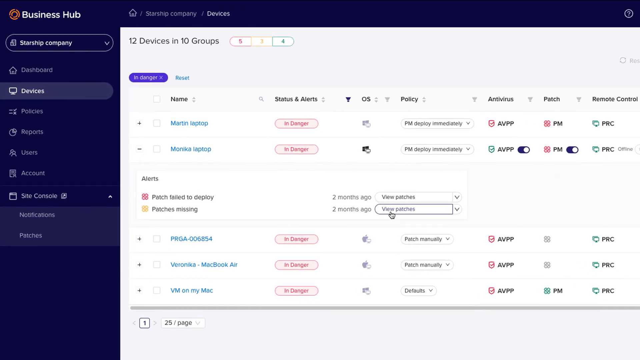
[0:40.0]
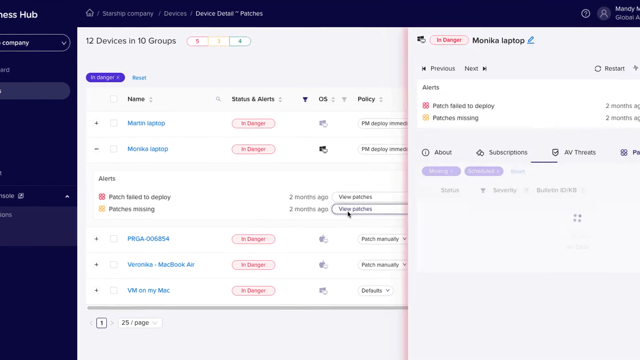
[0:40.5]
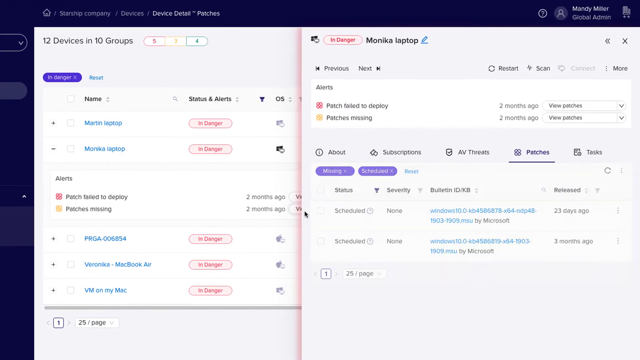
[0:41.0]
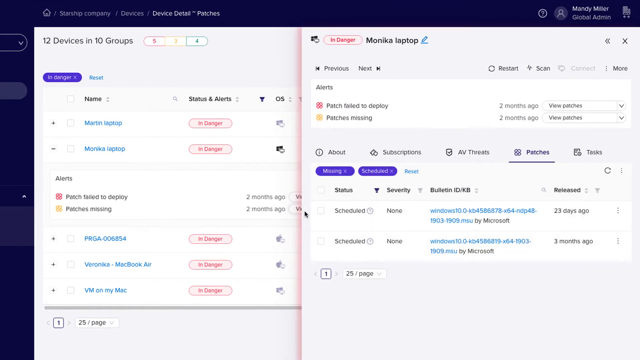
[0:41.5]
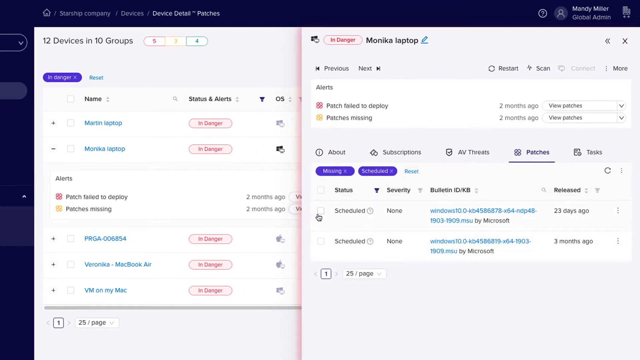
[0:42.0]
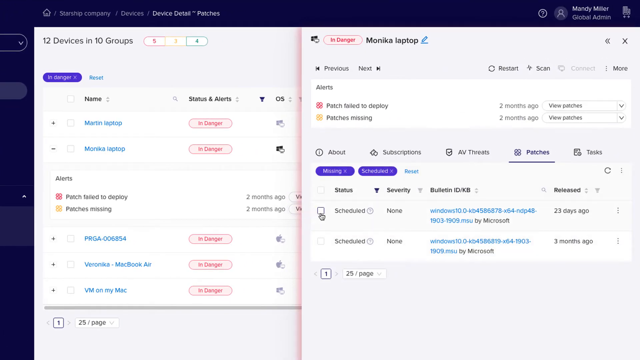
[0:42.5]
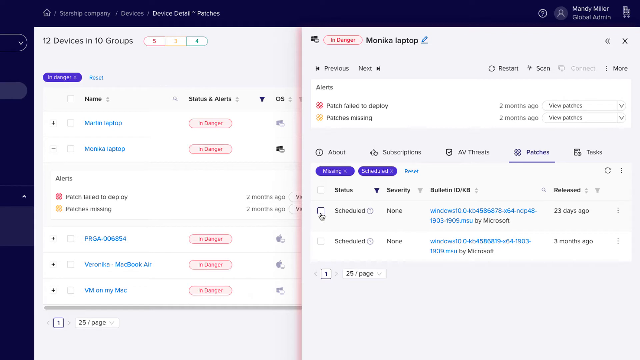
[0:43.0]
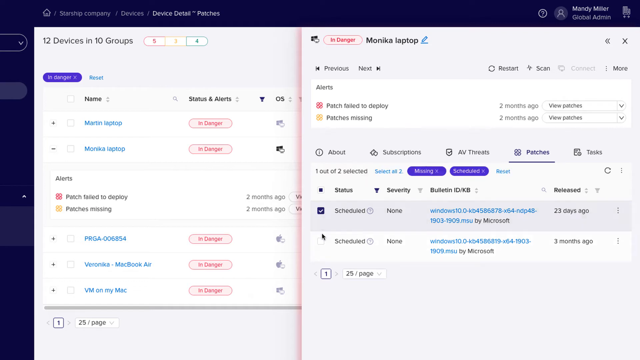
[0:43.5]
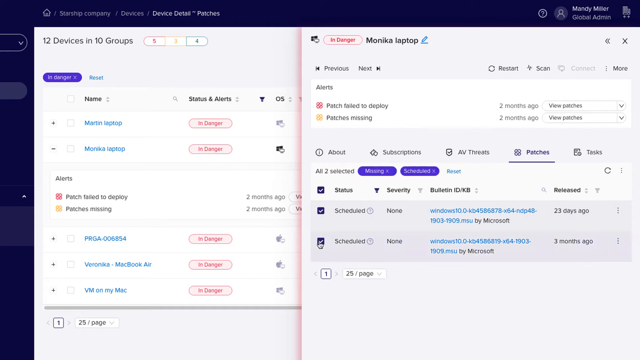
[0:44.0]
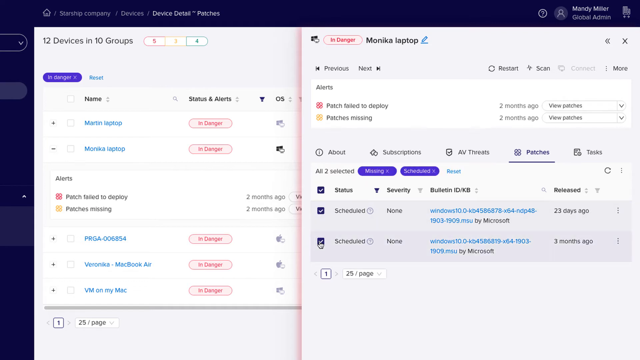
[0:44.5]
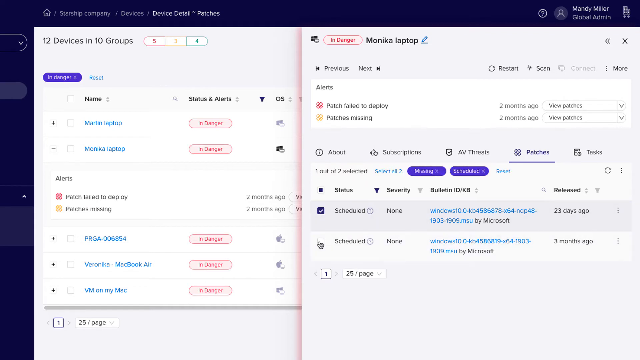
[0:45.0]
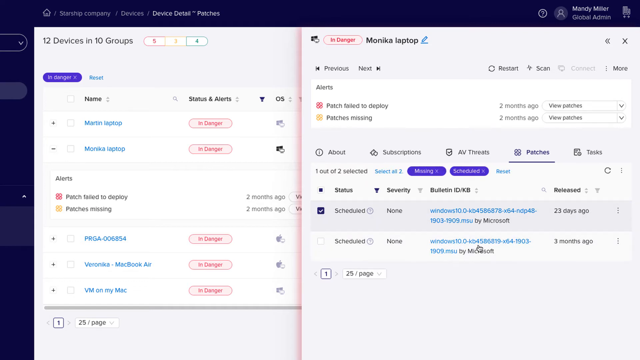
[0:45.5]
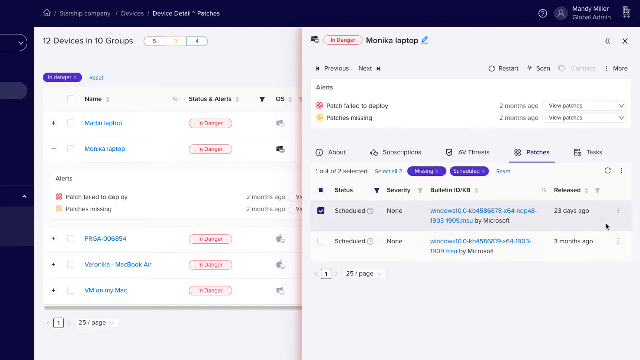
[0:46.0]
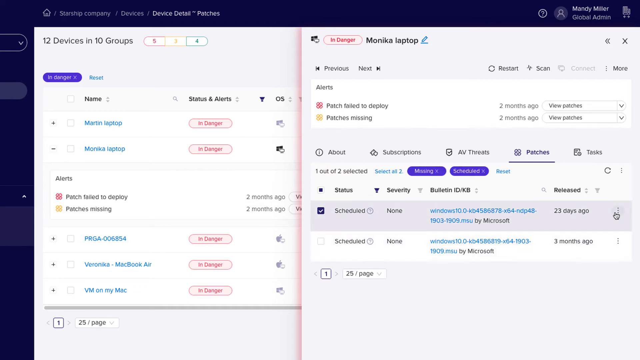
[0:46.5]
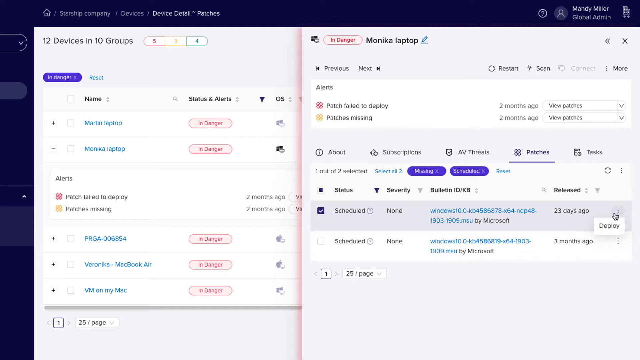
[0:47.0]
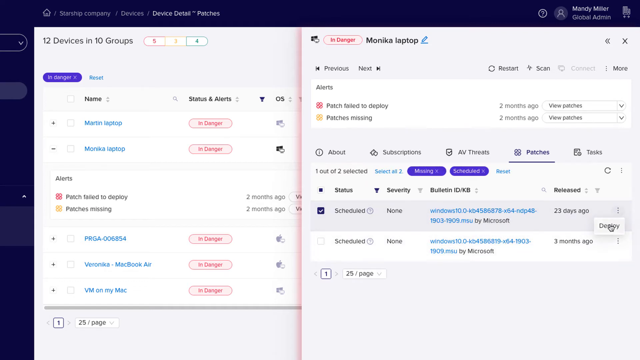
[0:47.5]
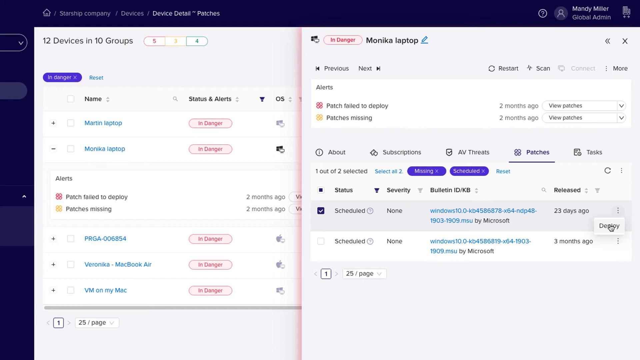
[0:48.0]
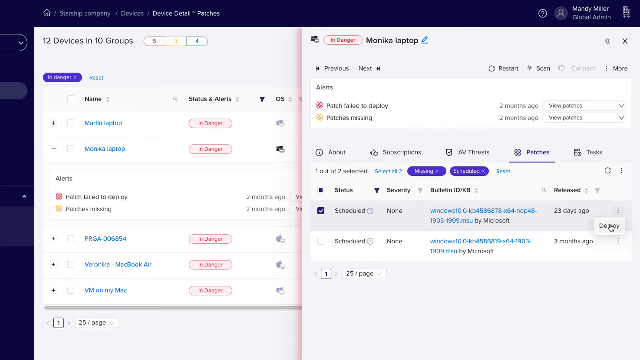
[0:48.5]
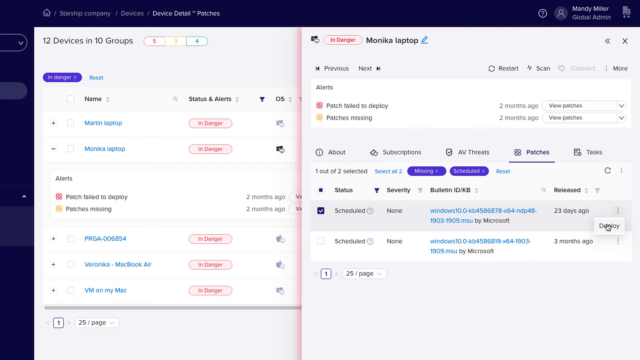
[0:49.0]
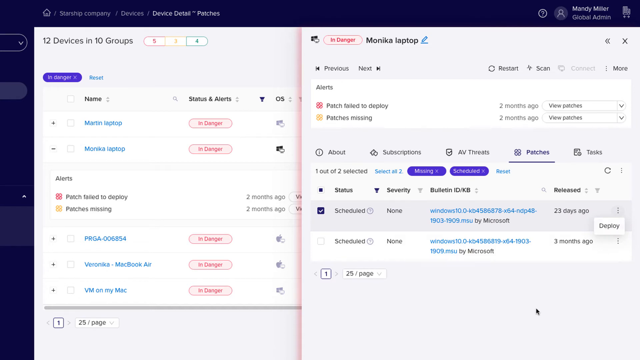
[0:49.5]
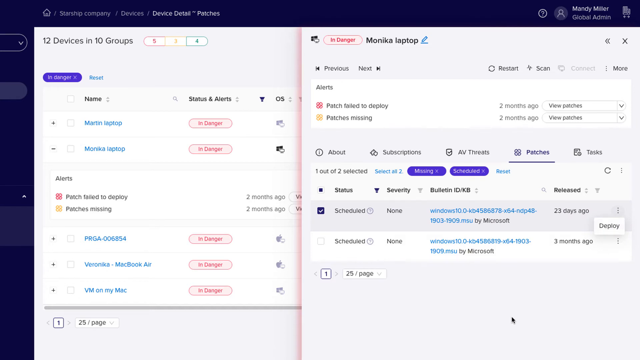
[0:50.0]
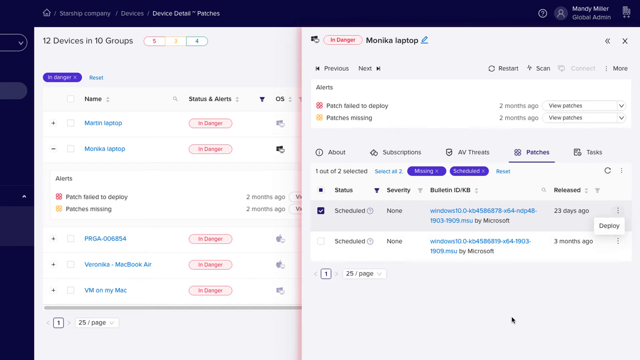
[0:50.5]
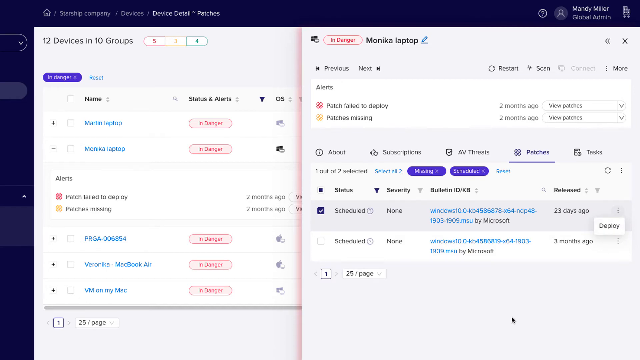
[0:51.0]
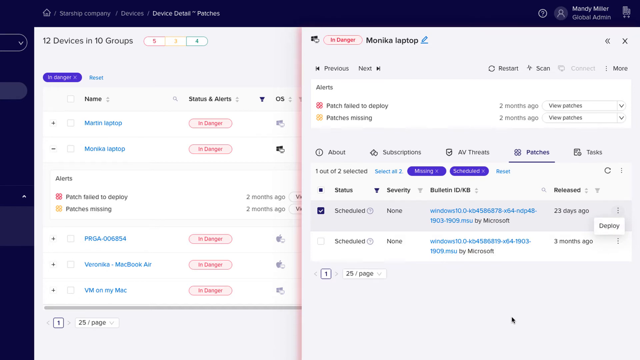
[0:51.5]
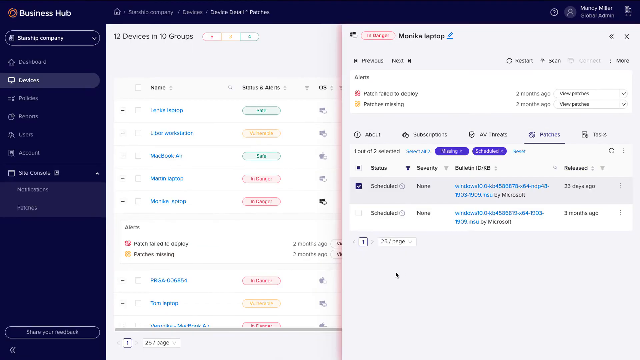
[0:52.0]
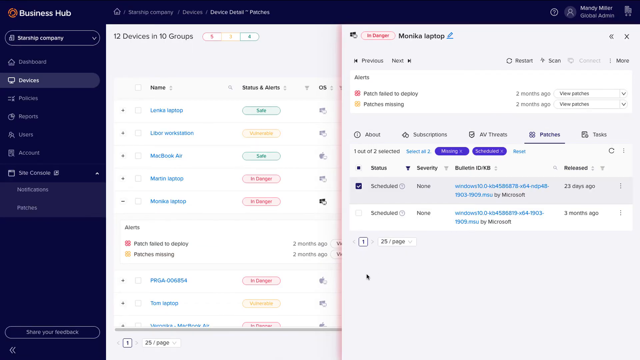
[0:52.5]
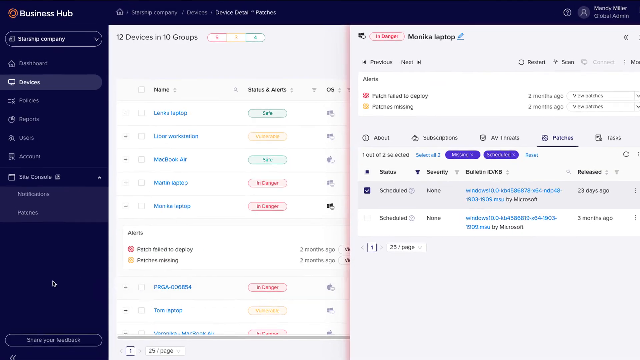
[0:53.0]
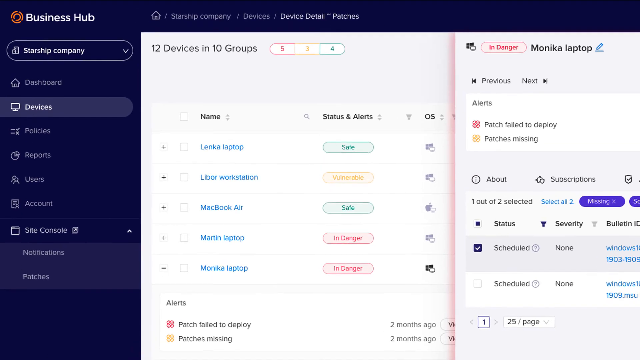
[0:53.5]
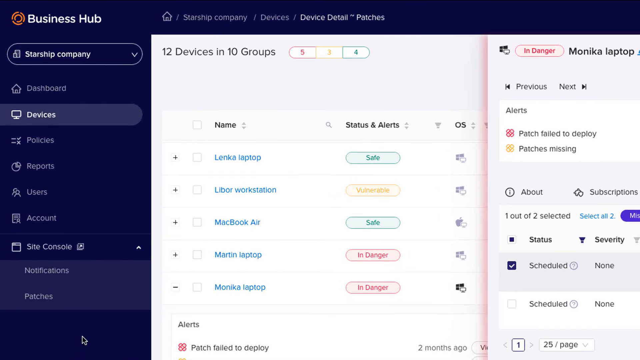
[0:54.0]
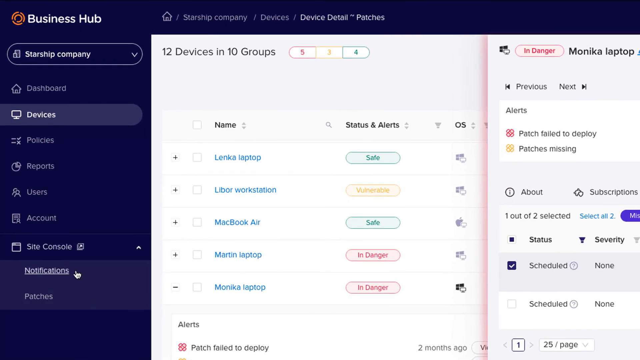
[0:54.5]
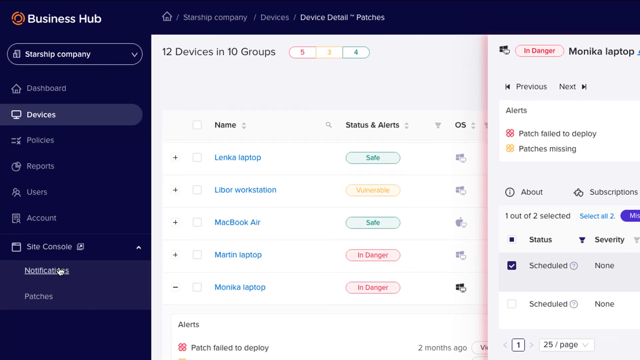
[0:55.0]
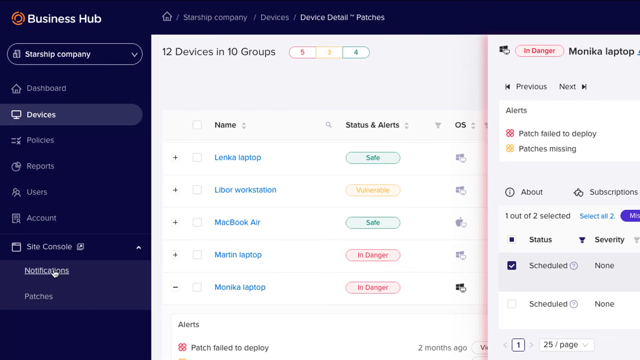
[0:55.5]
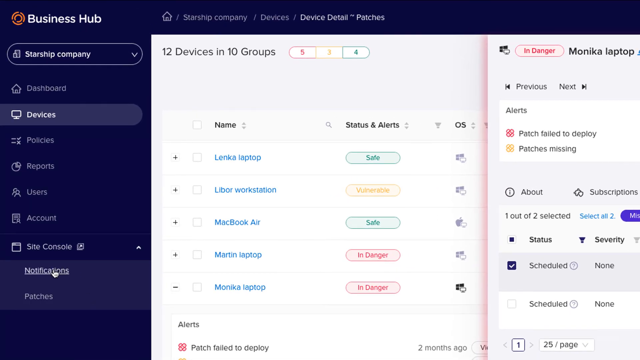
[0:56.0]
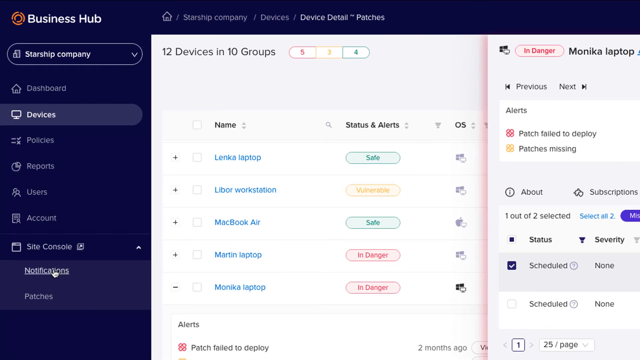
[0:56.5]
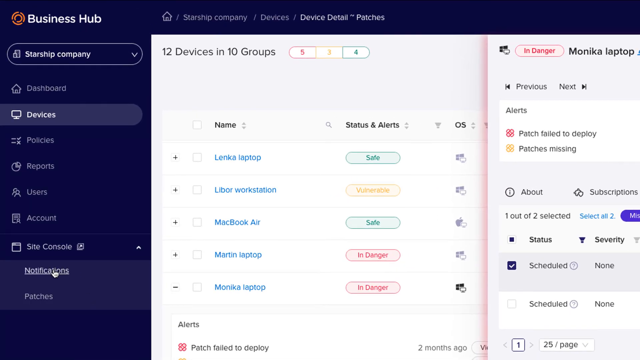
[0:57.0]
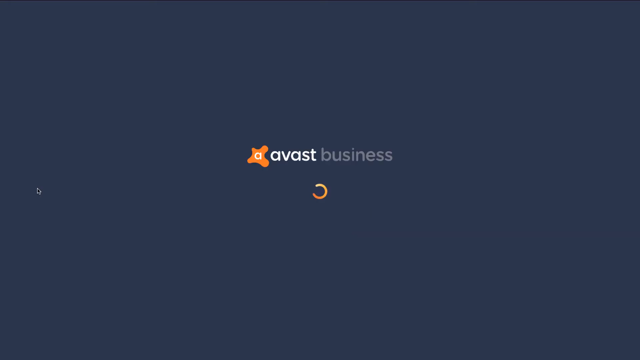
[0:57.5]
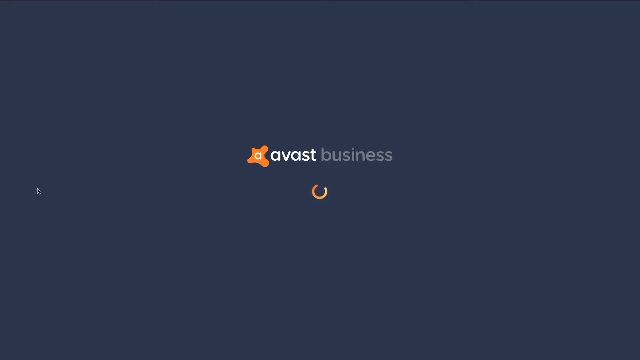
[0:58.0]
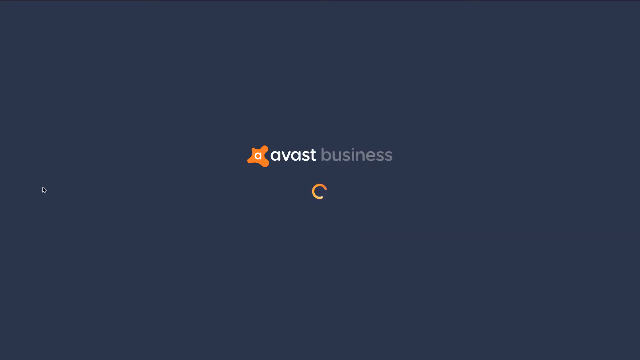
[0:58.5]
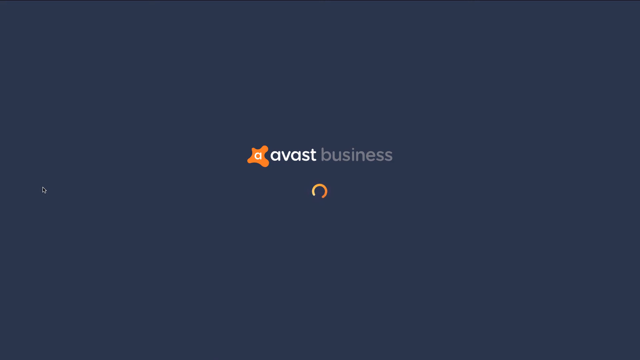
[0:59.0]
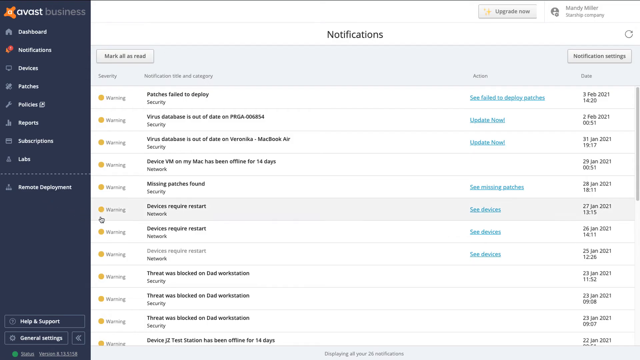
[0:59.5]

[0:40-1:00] The view is now closer, showing a notification and a search option. The items are written in different colors, which seem to differentiate between users. There appears to be another device that has been created.